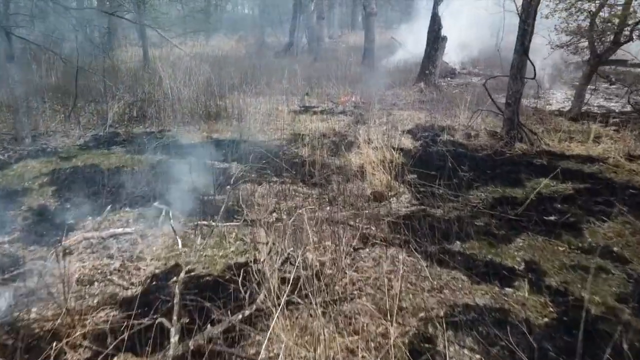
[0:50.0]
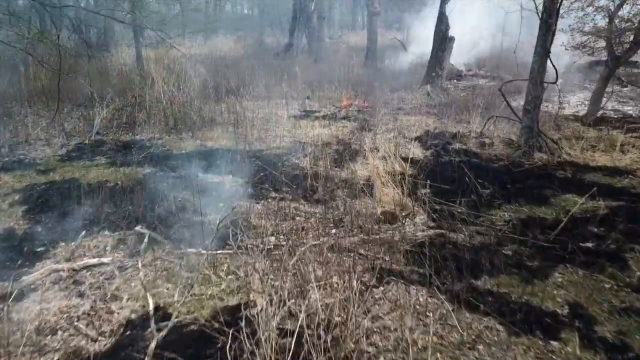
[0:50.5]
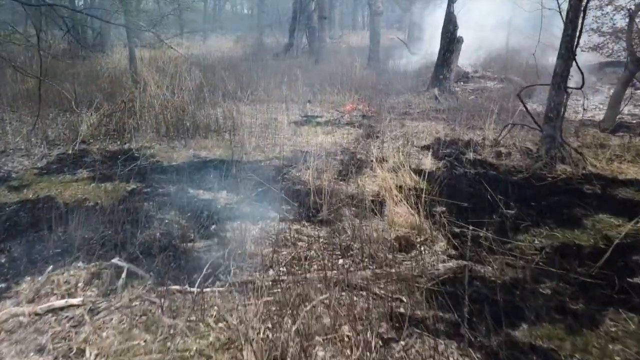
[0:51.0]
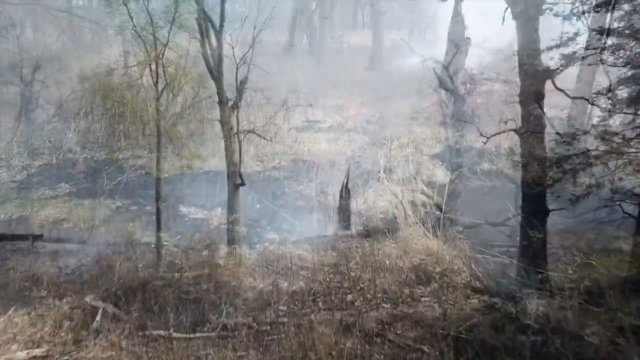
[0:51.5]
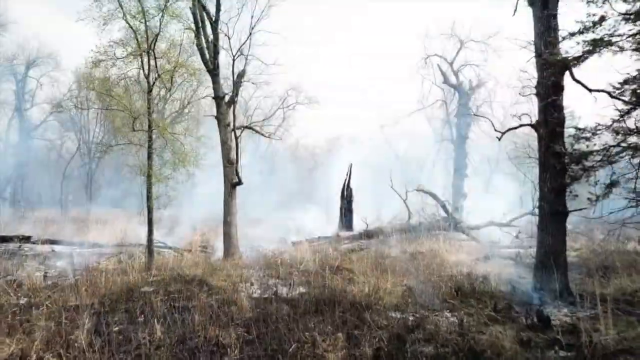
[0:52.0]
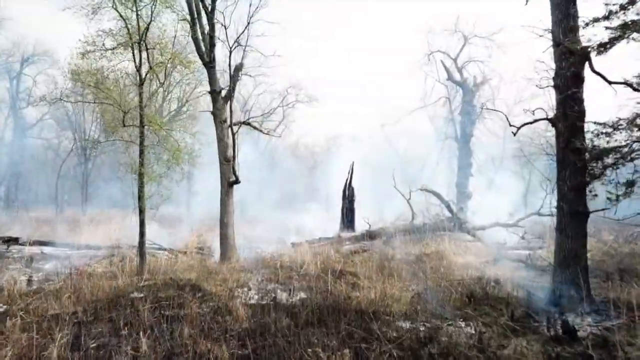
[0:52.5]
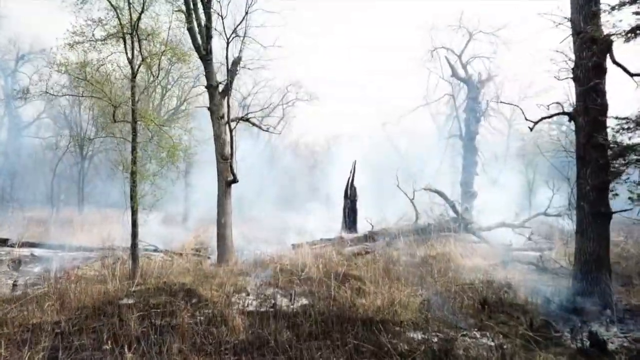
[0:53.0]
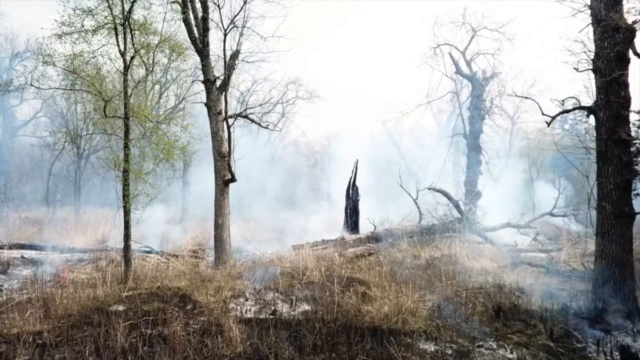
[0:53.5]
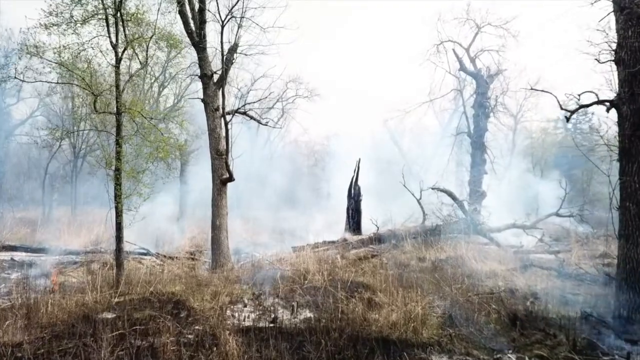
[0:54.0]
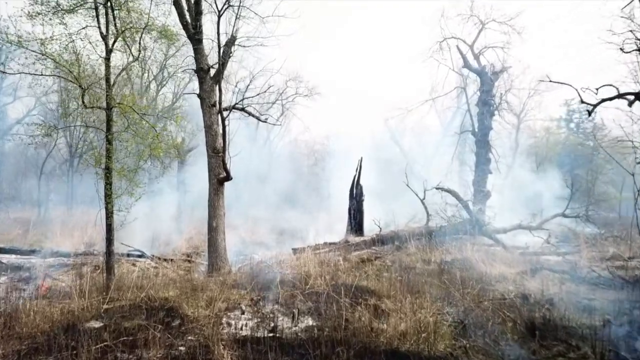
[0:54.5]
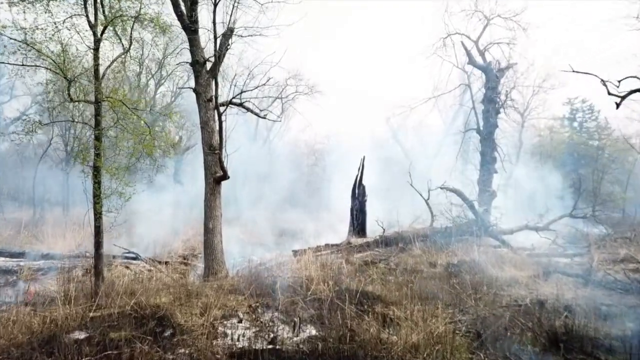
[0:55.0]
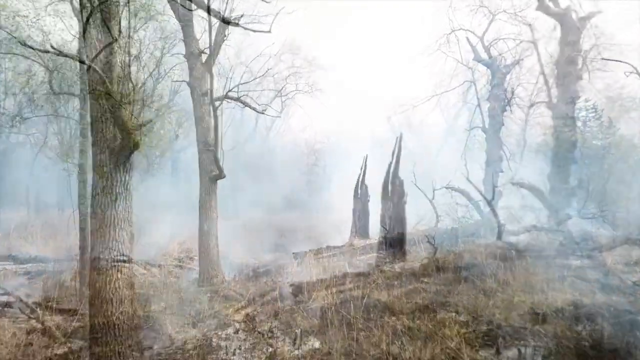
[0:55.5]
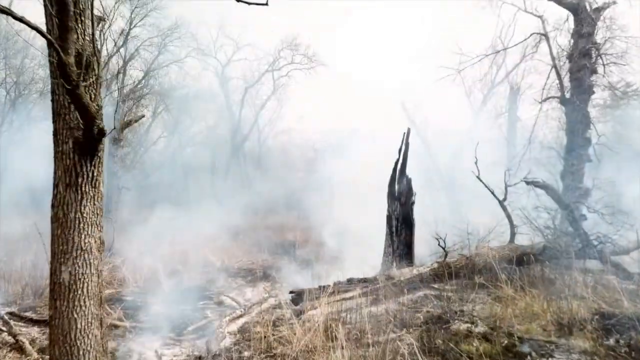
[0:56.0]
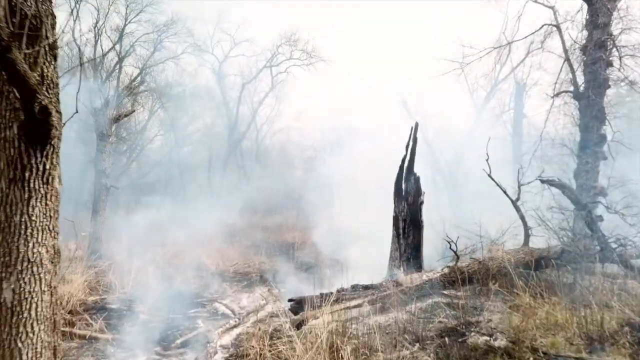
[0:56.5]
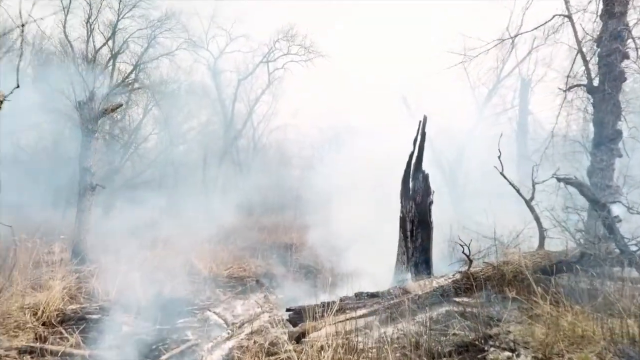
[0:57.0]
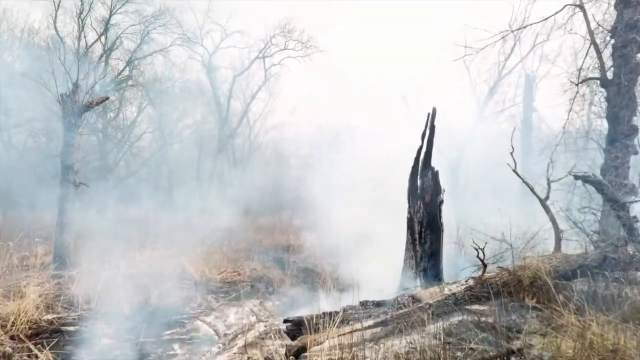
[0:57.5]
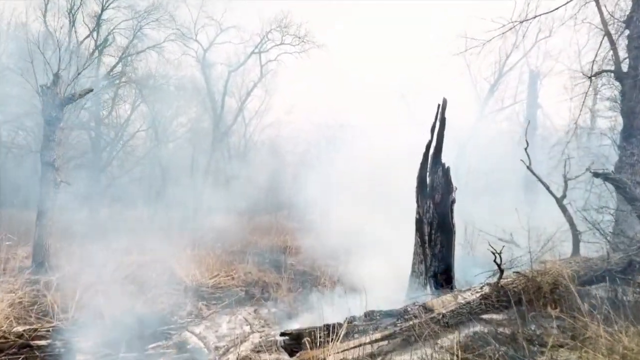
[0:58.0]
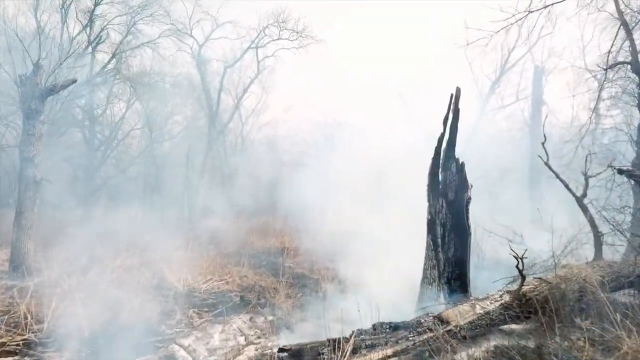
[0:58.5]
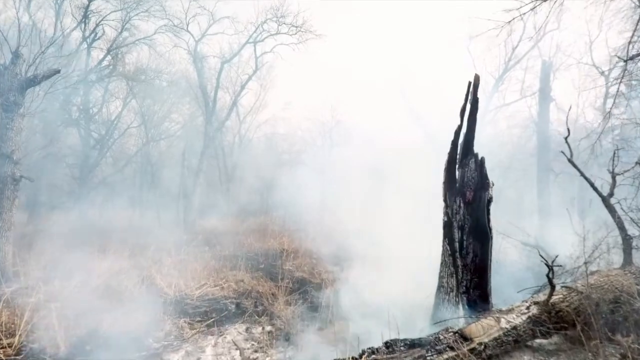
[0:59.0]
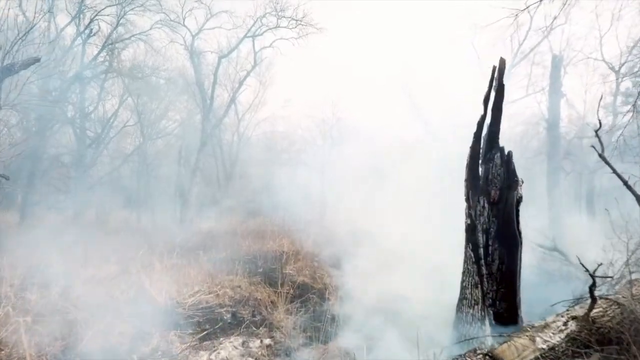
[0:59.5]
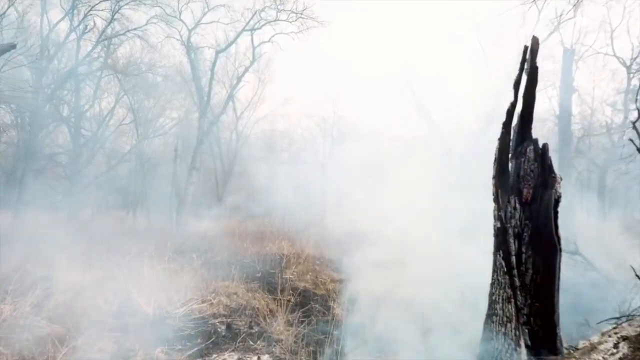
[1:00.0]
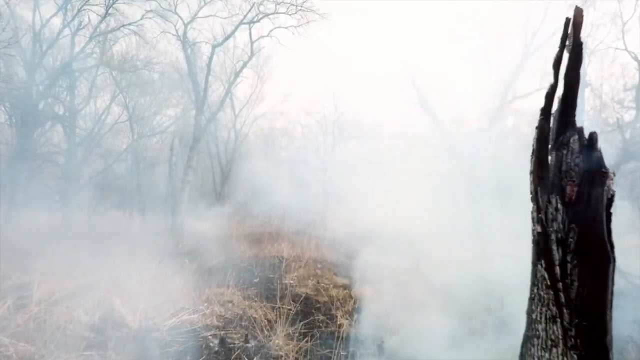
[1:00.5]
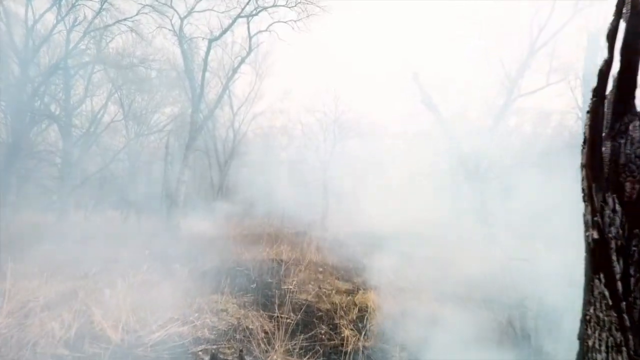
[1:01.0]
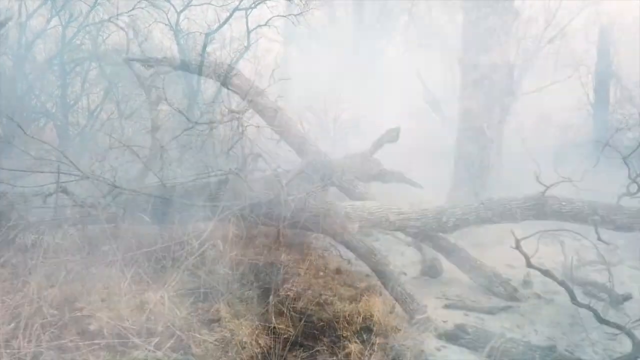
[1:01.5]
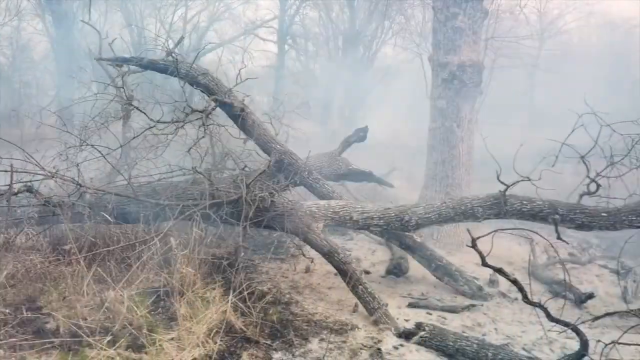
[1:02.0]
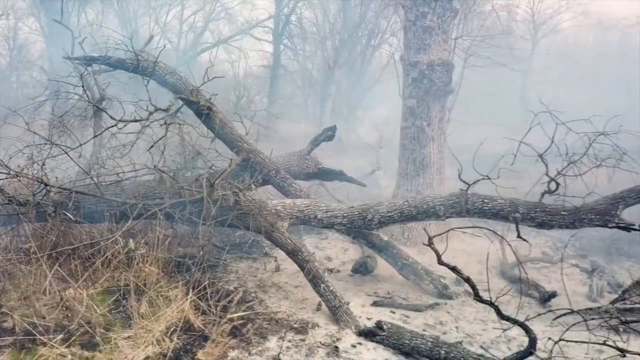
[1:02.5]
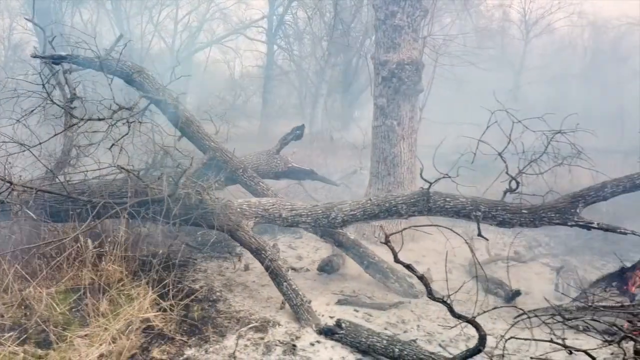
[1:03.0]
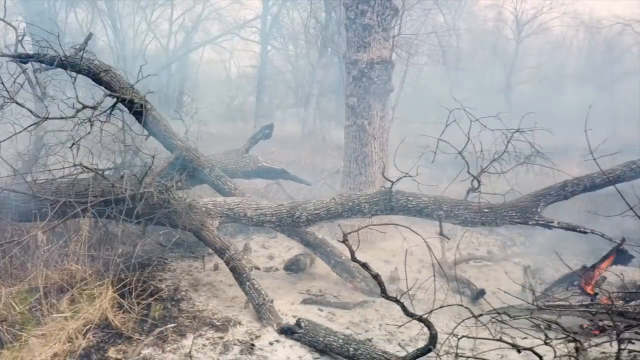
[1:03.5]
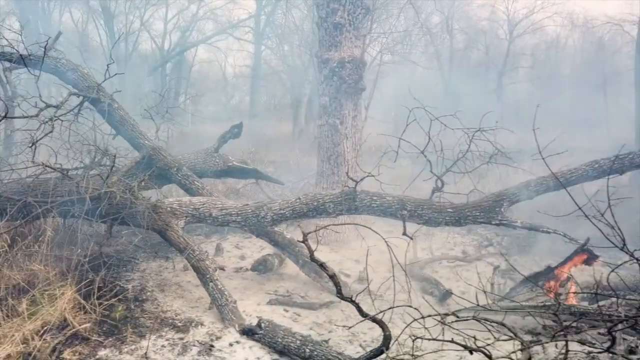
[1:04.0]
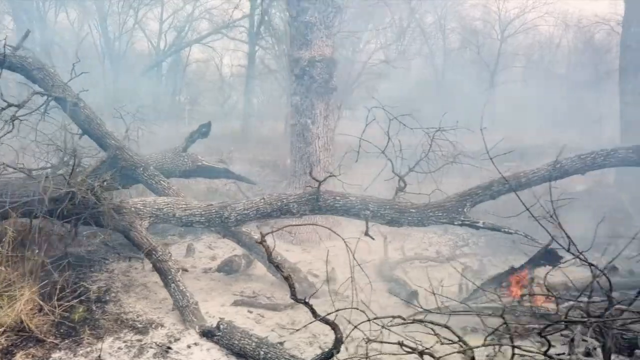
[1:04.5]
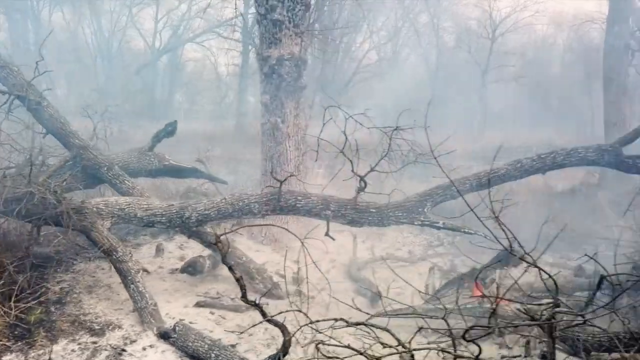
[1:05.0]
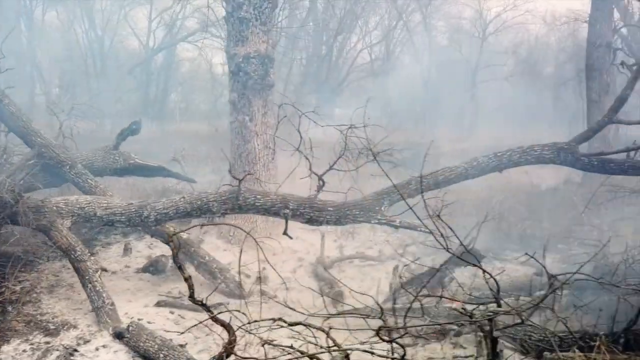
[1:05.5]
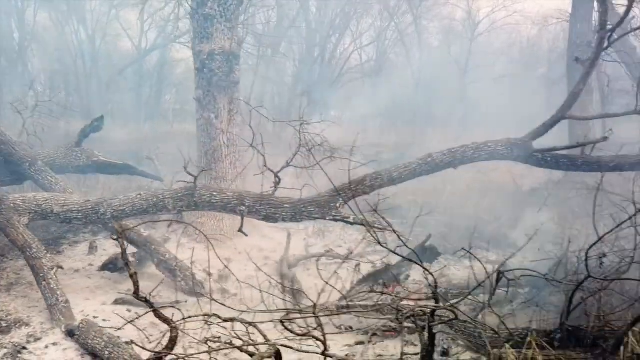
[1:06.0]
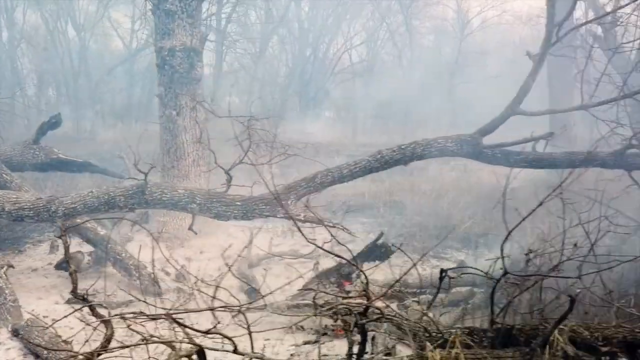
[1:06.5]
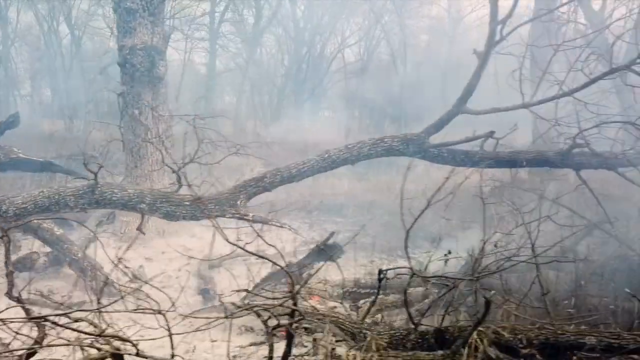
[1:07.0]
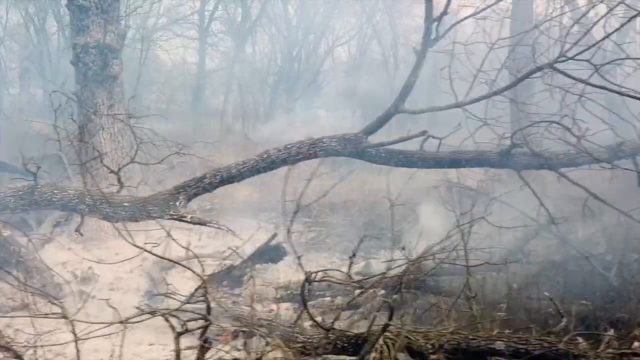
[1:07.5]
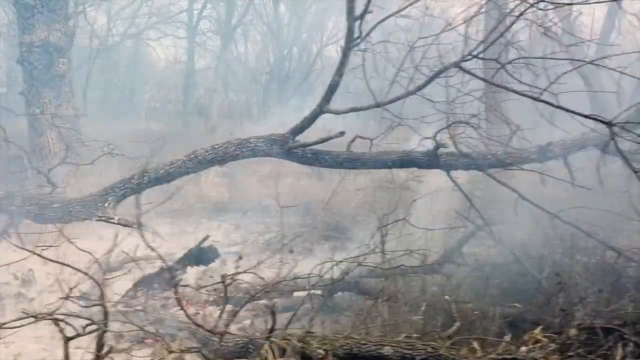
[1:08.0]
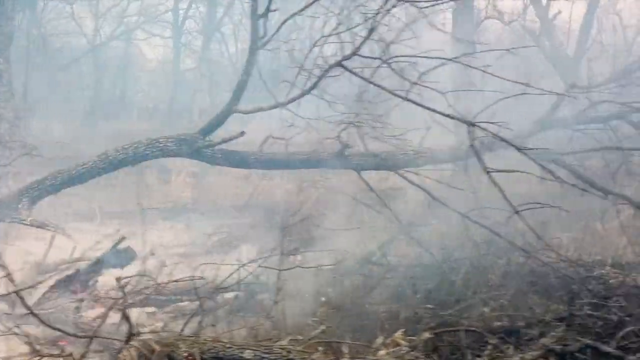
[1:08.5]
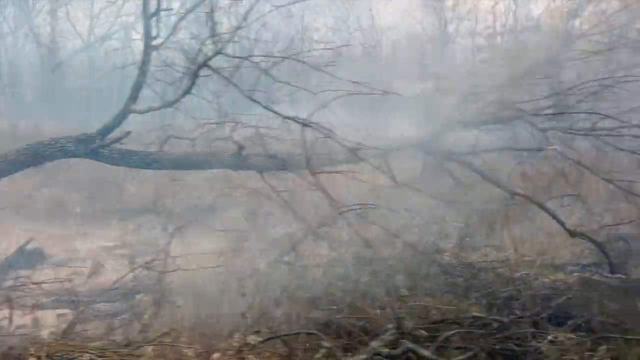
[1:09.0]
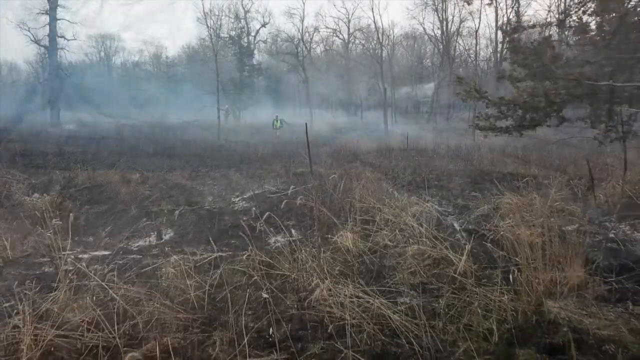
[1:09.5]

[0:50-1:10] The footage is taken from above an area that was purposely burned in a controlled burn, apparently targeting brush and smaller or older trees. The view pans across the burned area, where little flames are visible at ground level and white smoke moves through the area. Some of the trees look old and gangly, possibly with vines on them. The white sky in the background shines through the smoke.